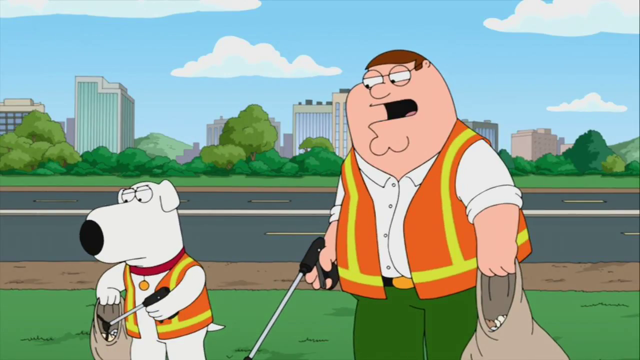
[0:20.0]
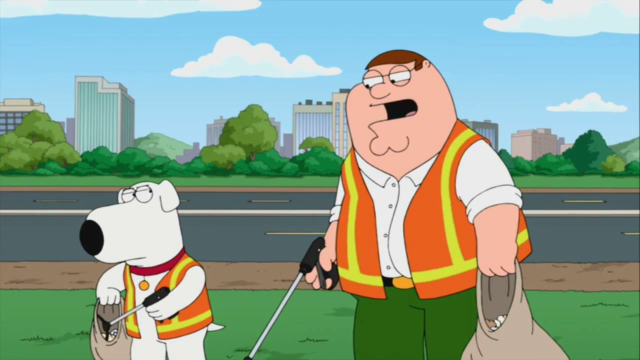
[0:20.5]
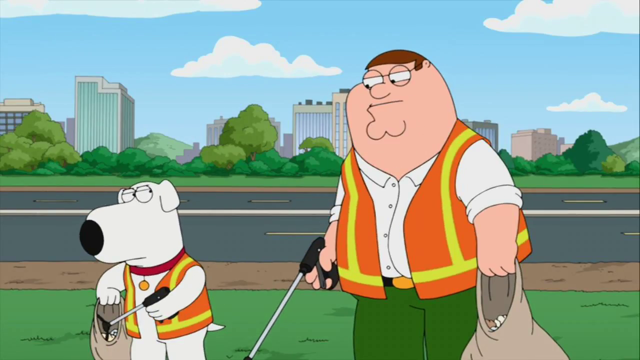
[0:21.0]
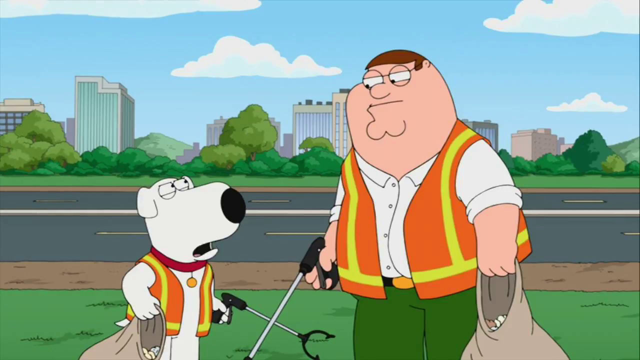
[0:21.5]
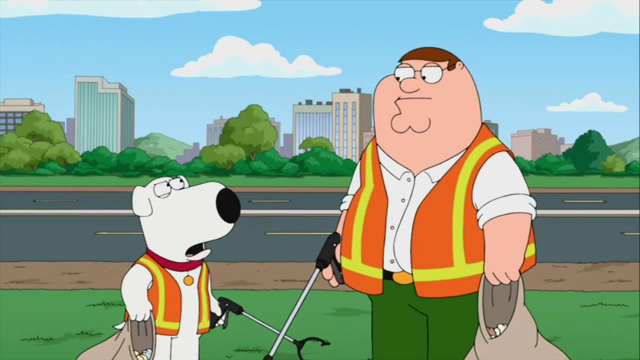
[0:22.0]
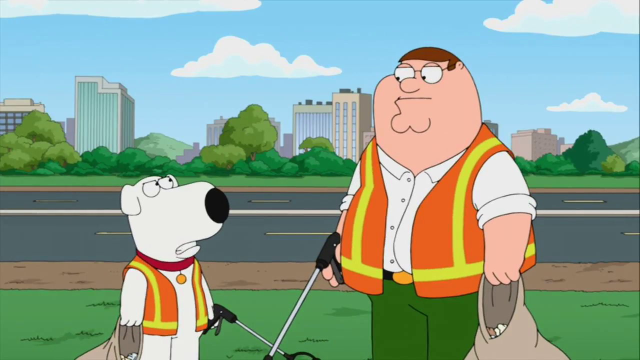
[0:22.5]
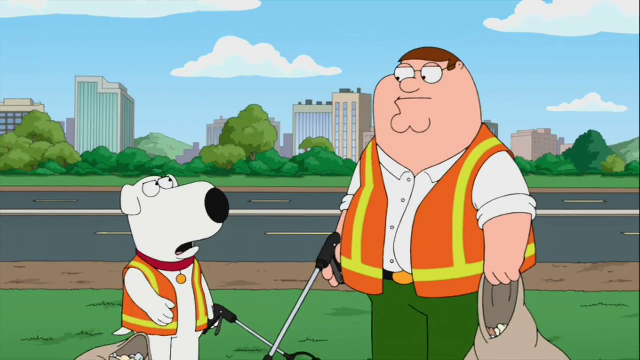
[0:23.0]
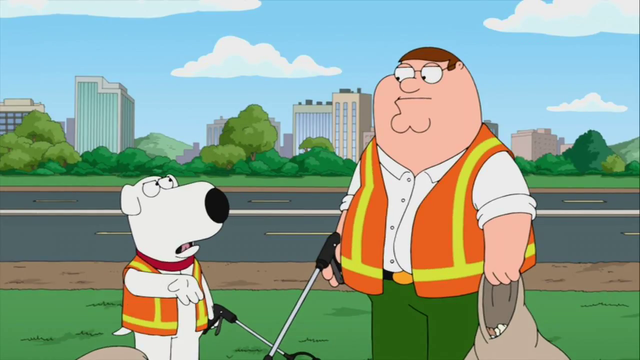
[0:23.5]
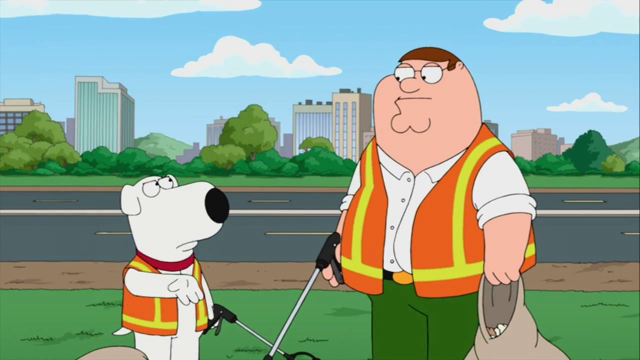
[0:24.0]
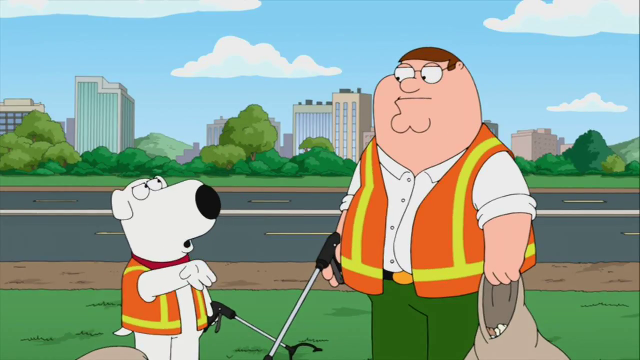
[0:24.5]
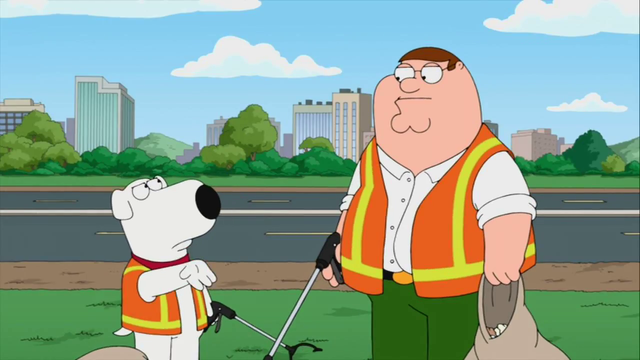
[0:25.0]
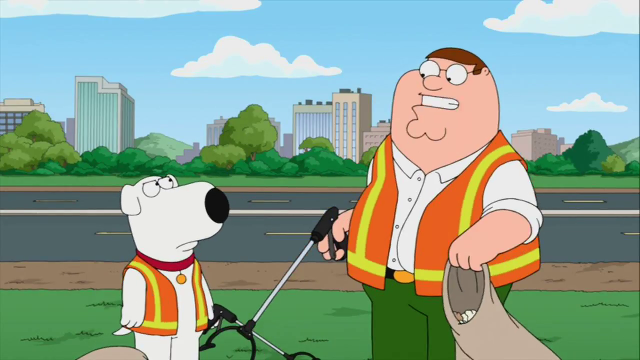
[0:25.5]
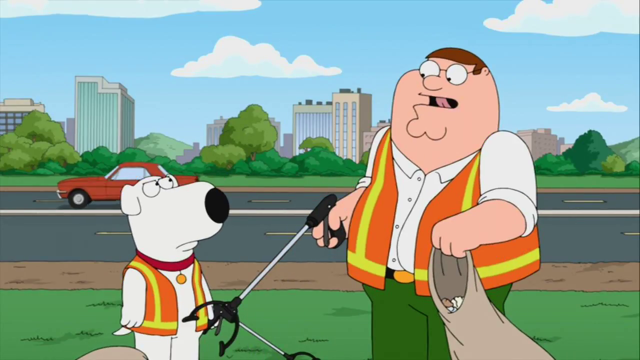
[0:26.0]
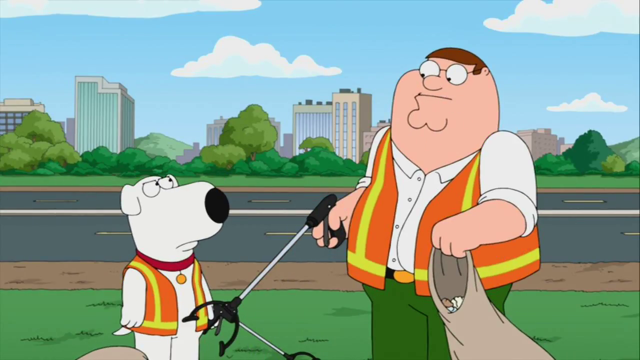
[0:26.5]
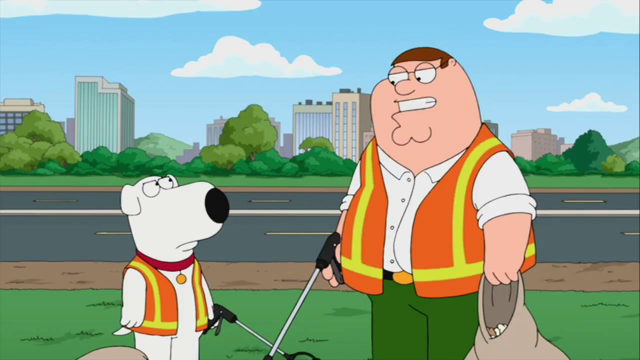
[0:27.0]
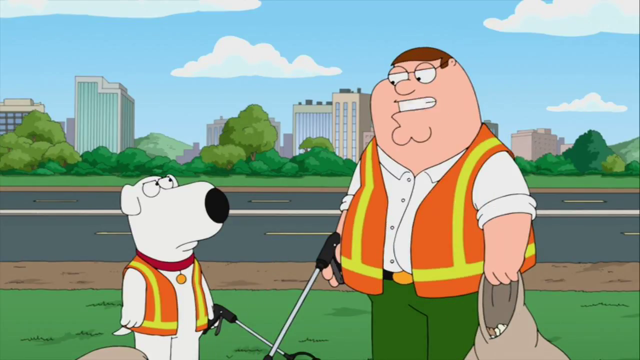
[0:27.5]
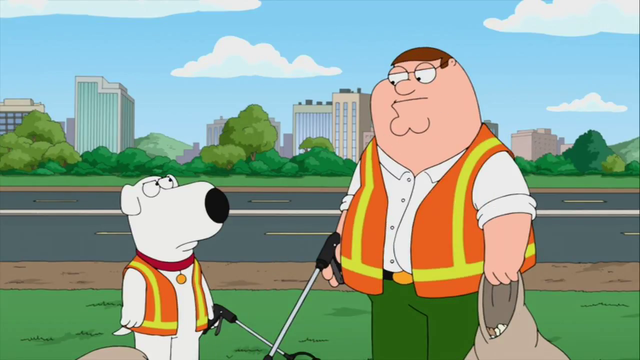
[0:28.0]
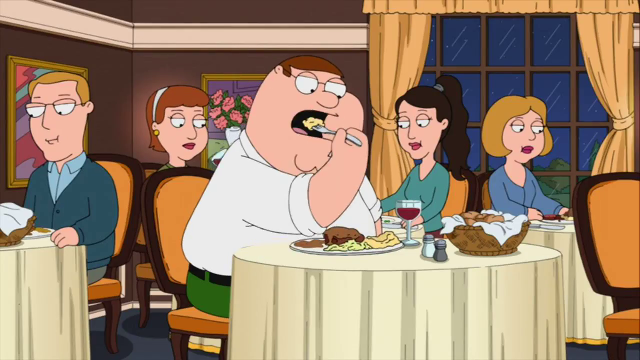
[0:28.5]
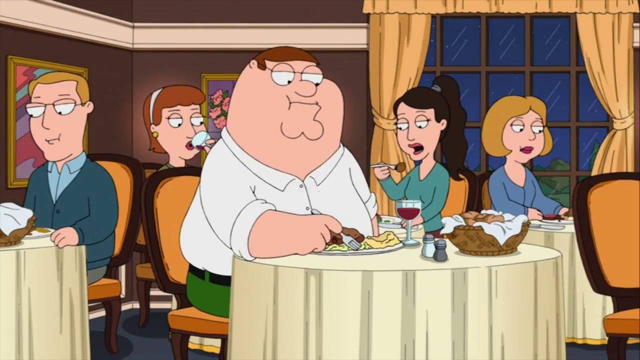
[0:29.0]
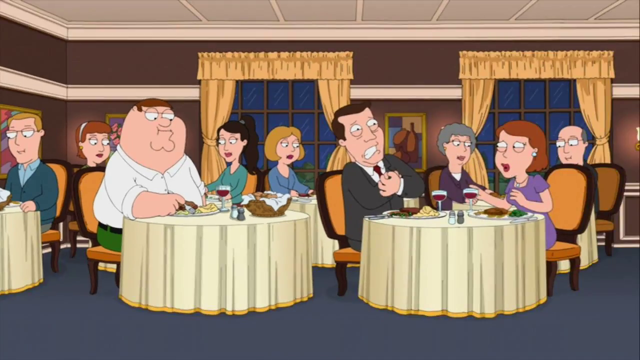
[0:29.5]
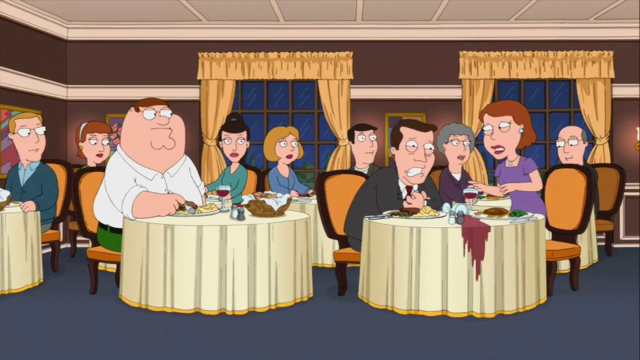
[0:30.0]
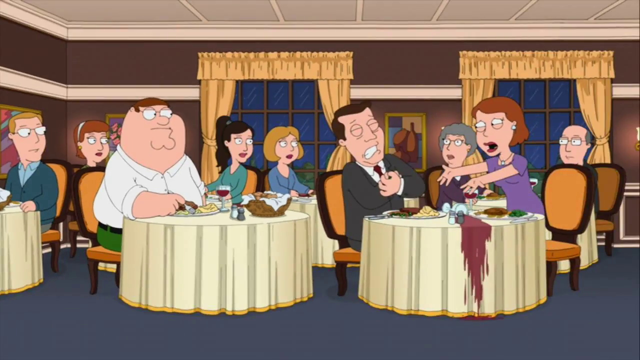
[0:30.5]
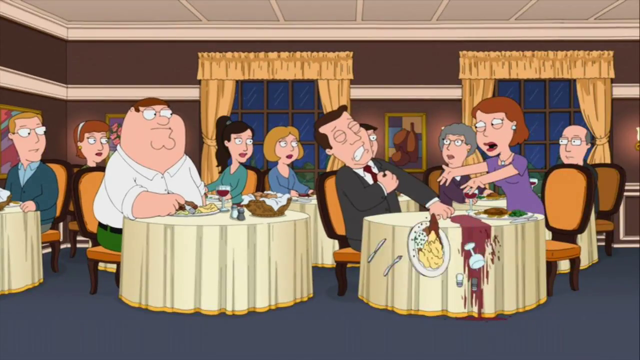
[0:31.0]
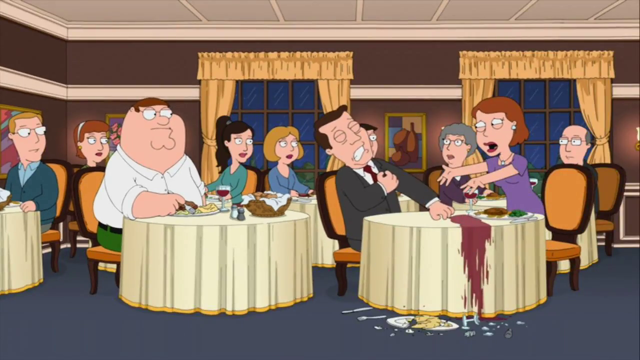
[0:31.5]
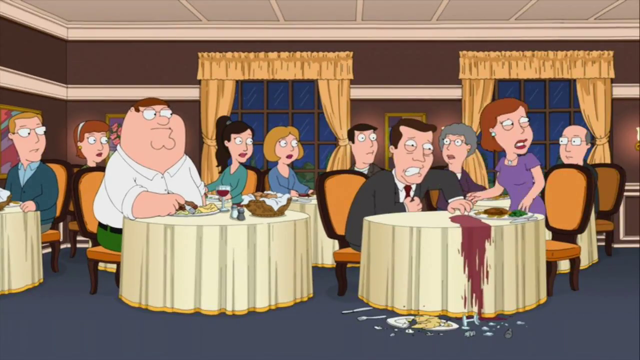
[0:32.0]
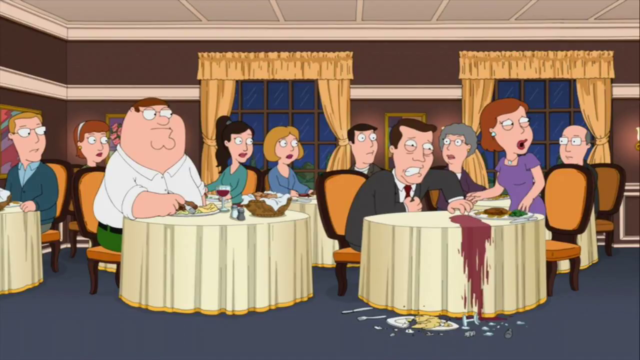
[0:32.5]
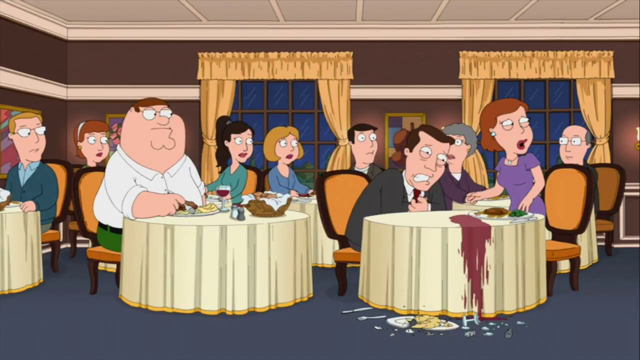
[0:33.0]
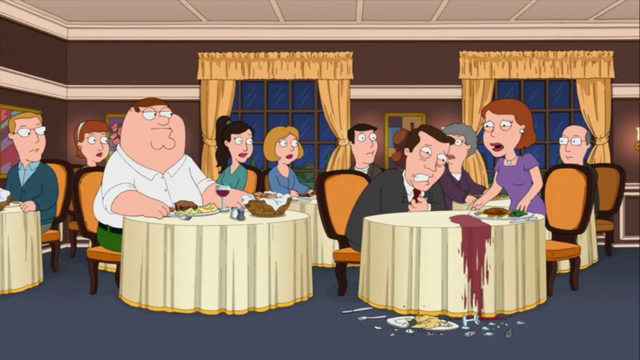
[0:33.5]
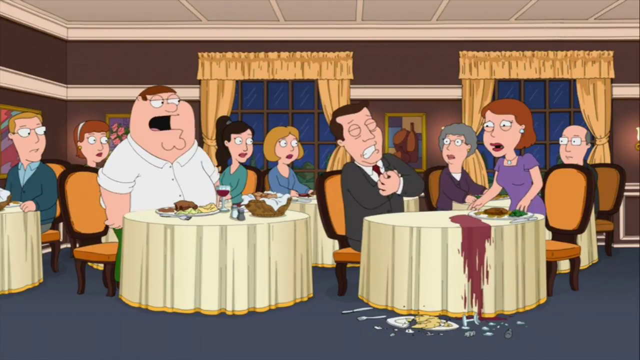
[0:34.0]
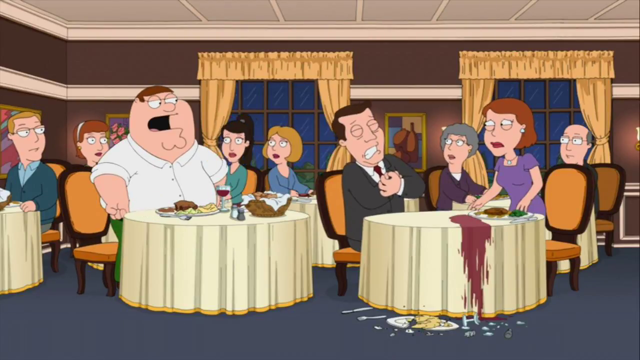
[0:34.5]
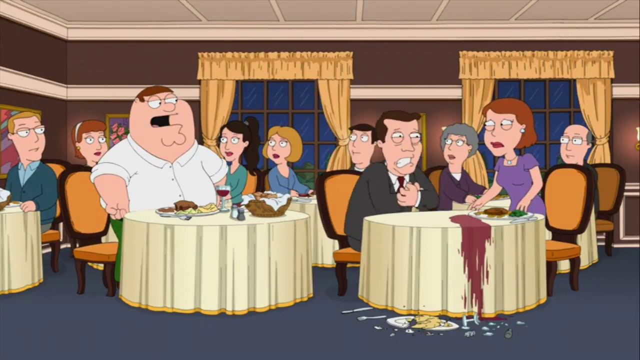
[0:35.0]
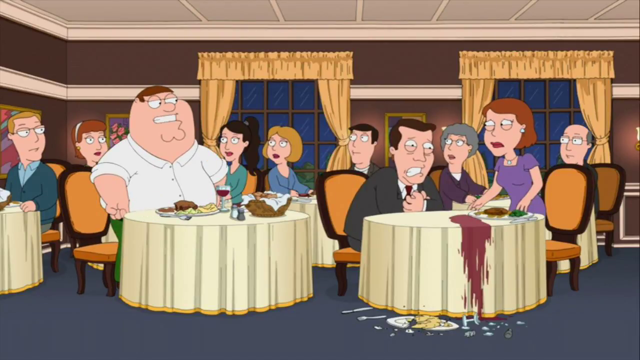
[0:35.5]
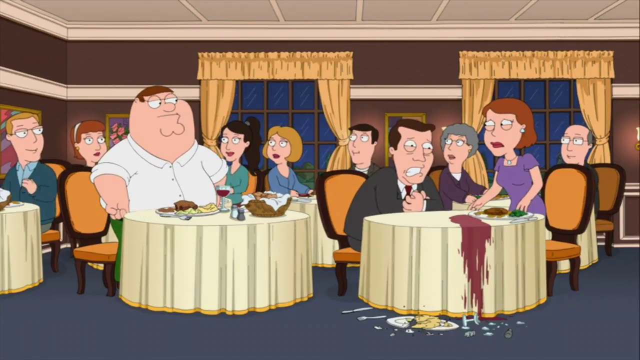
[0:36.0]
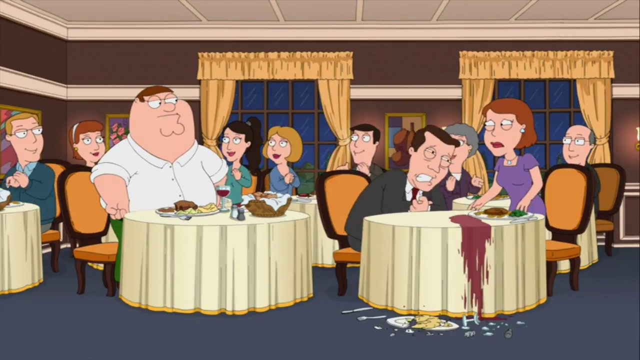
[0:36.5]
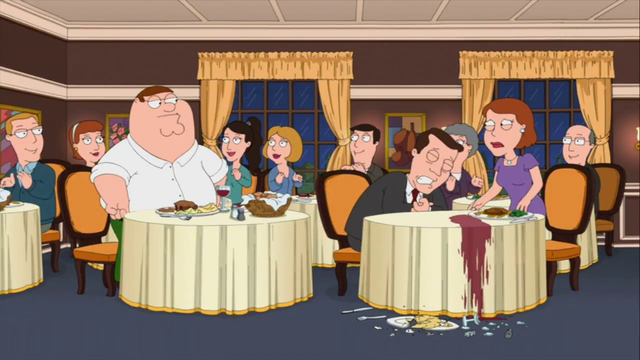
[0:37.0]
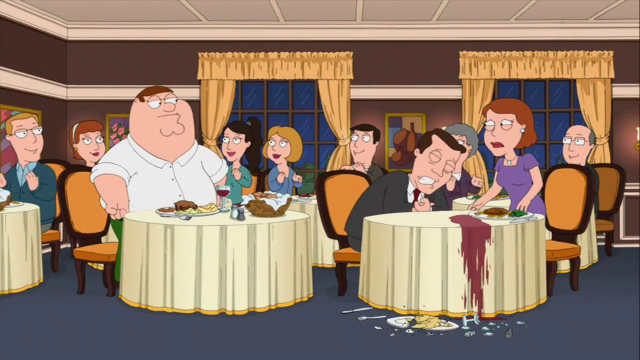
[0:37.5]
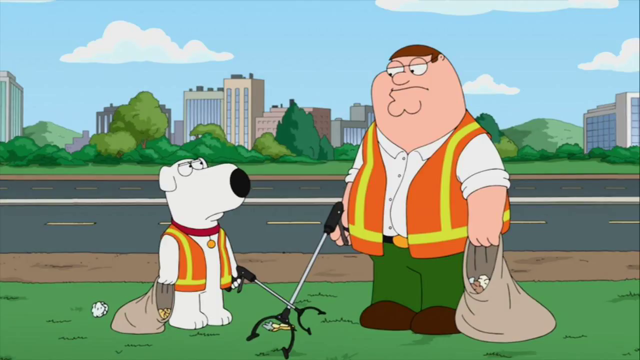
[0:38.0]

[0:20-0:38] The dog is still on the left and the man on the right. The man keeps talking to the dog as he shrugs his shoulders. The dog turns to him, starts talking very quickly, and raises his right arm out as if frustrated about something. The man shrugs his shoulders up in the air as if to indicate he doesn't know and is confused. He keeps talking as the scene shifts to the large gentleman sitting in a restaurant eating a large meal. The restaurant appears very crowded, with many women and men in the background. At a table just to the left of the large man are seated a man in a suit and tie with brown hair and a woman in a purple dress with red hair. The man appears to be choking: his arm raises towards his chest, his eyes are closed, and his mouth is in a grimace with his teeth showing. The wine glass on the table spills over and the plate falls on the floor. The woman stands and appears to be in shock, both arms extended forward. The man in pain moves forward on the table, constantly shaking. The large character stands up from the table and begins talking as the entire crowd faces him, except for the man crouched on the dinner table. The entire crowd begins clapping as the large man stands and talks; only the man crouched over on the table and his standing female companion are not clapping.